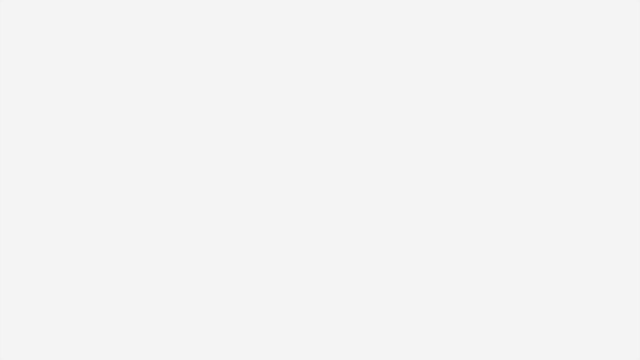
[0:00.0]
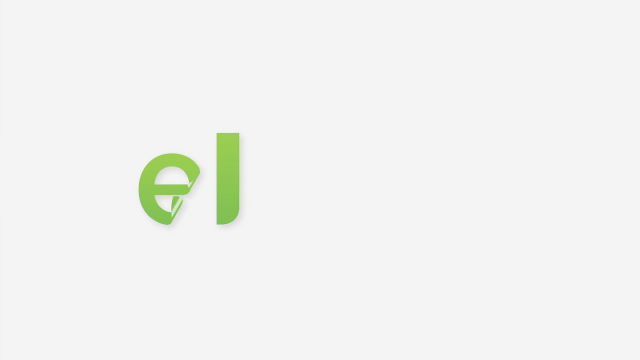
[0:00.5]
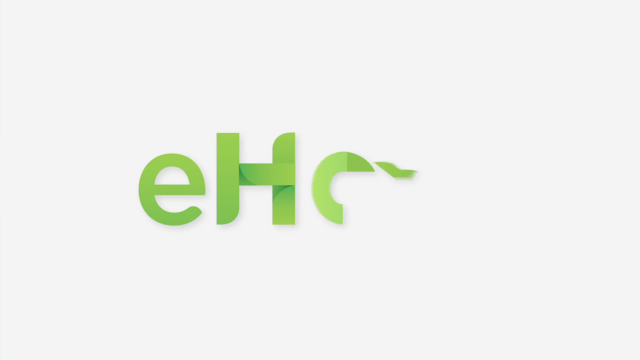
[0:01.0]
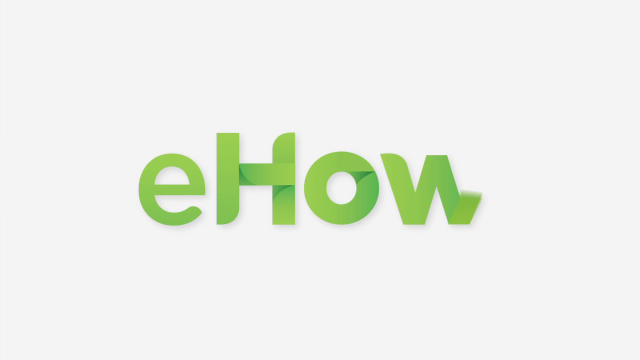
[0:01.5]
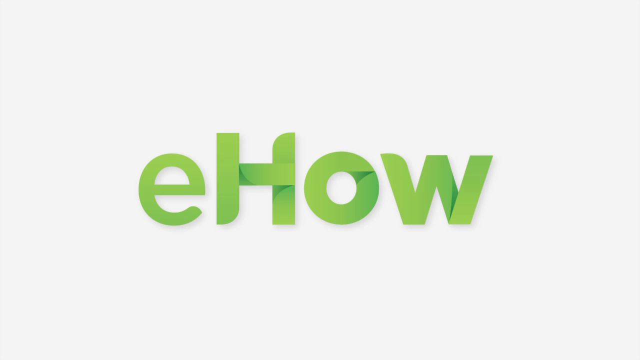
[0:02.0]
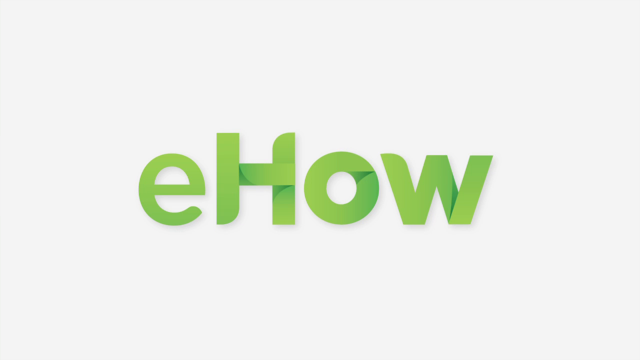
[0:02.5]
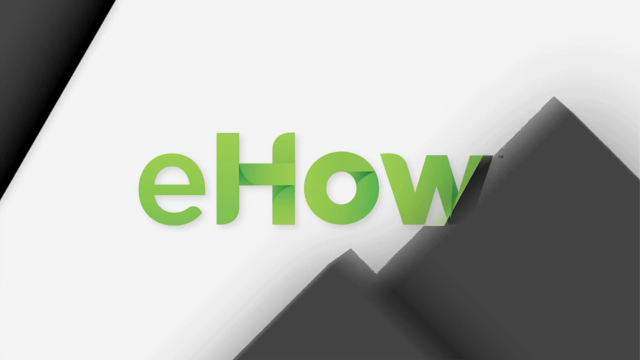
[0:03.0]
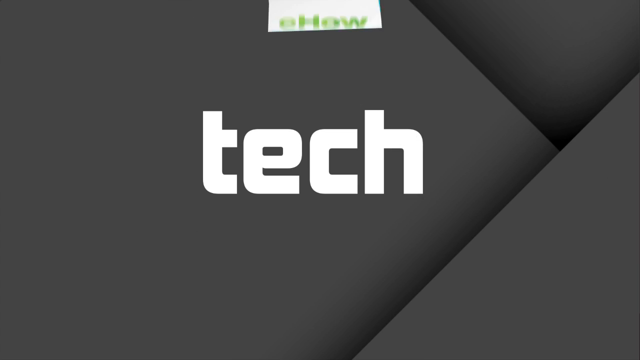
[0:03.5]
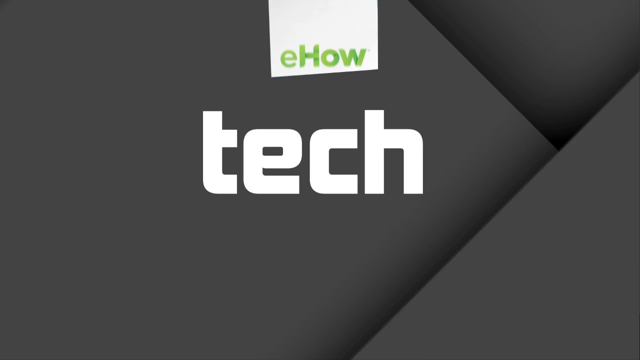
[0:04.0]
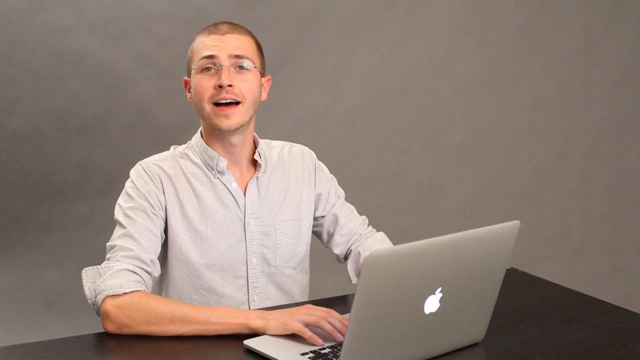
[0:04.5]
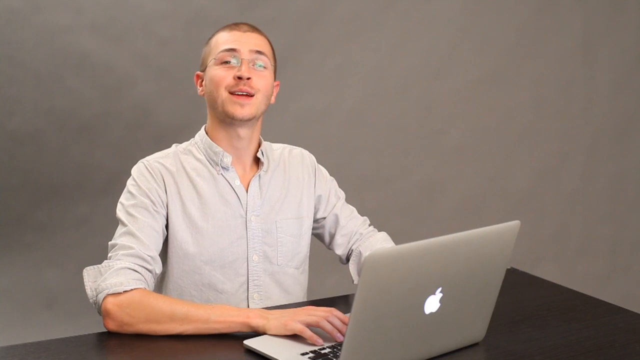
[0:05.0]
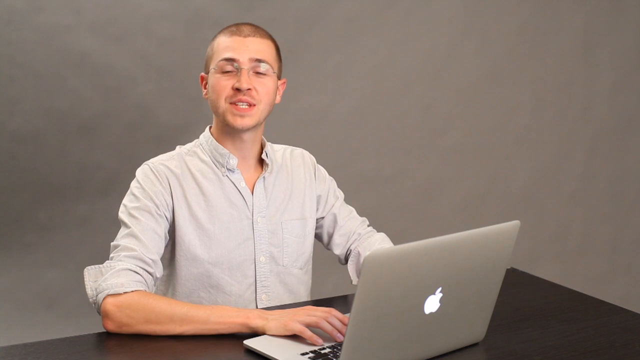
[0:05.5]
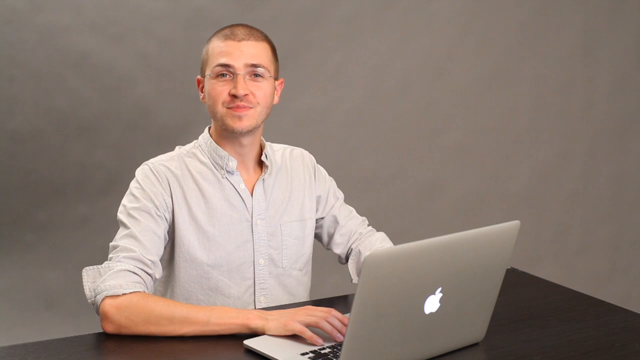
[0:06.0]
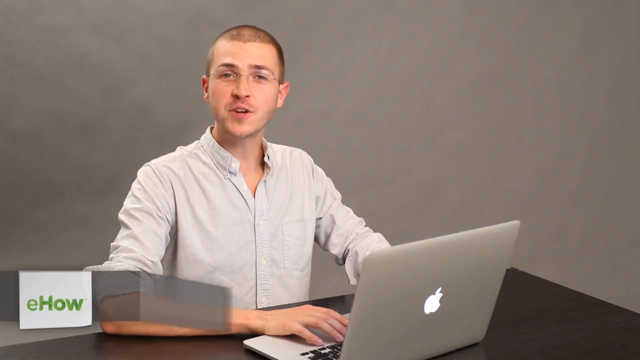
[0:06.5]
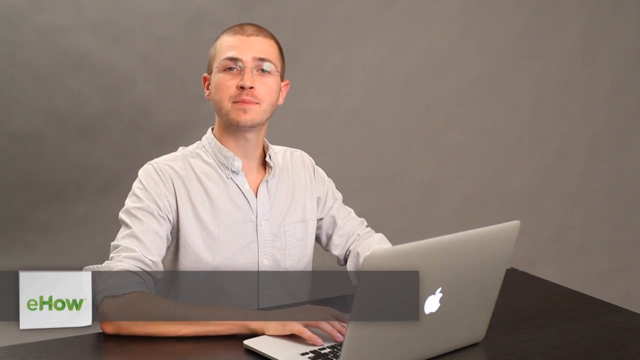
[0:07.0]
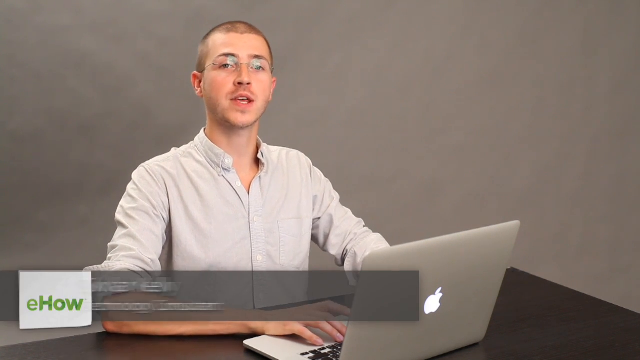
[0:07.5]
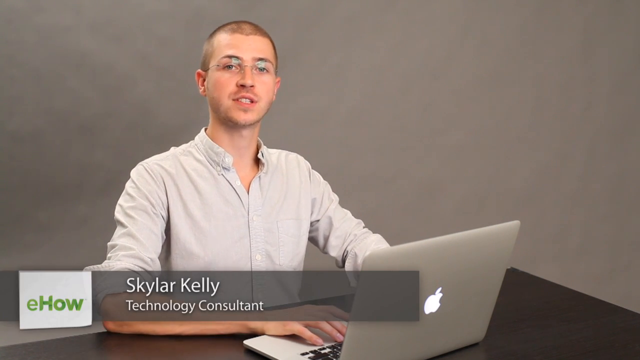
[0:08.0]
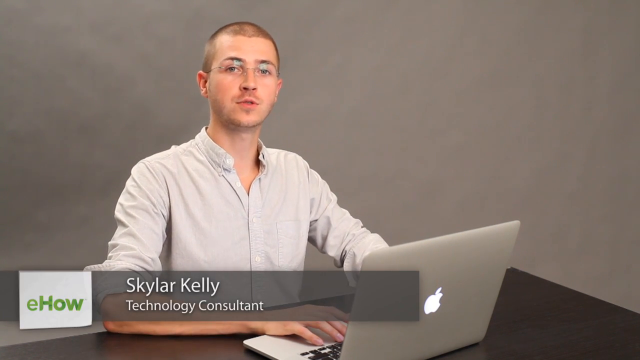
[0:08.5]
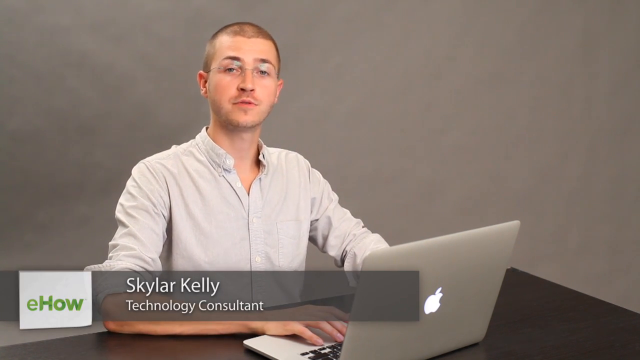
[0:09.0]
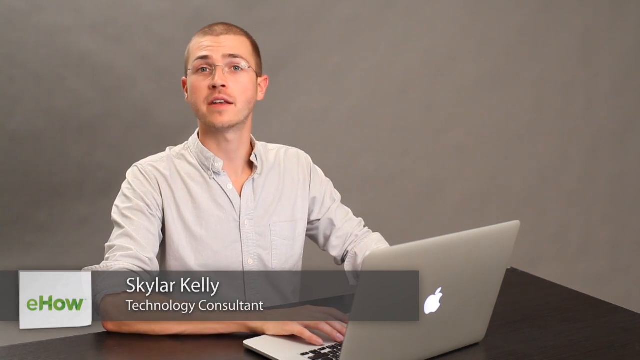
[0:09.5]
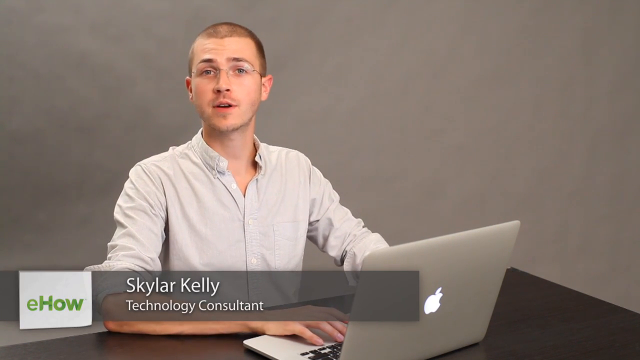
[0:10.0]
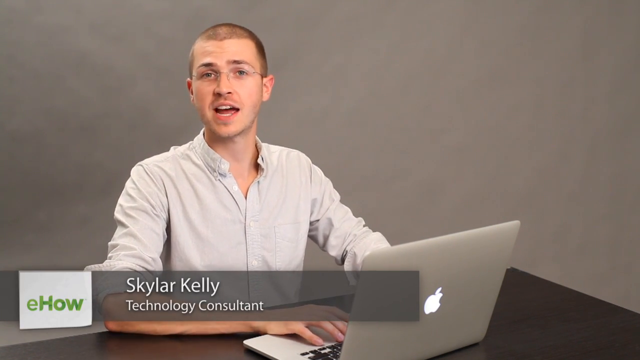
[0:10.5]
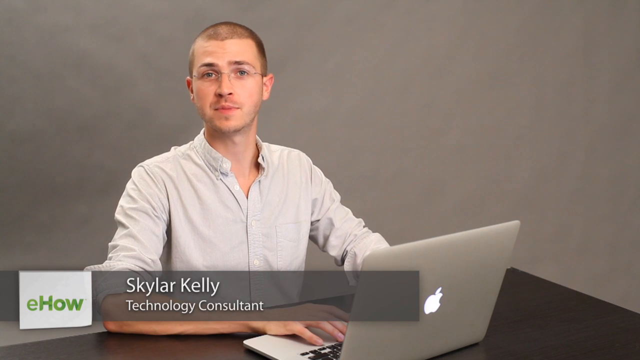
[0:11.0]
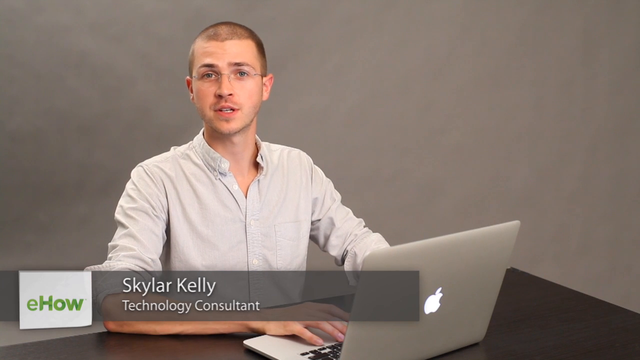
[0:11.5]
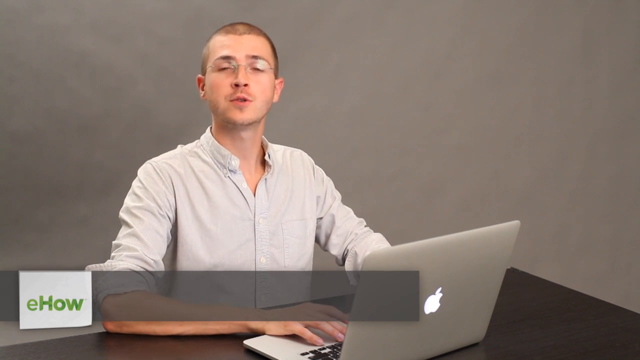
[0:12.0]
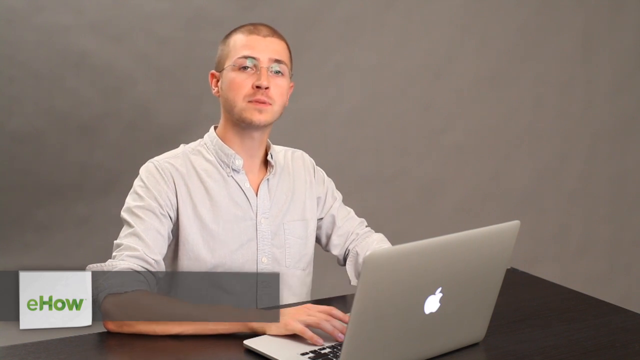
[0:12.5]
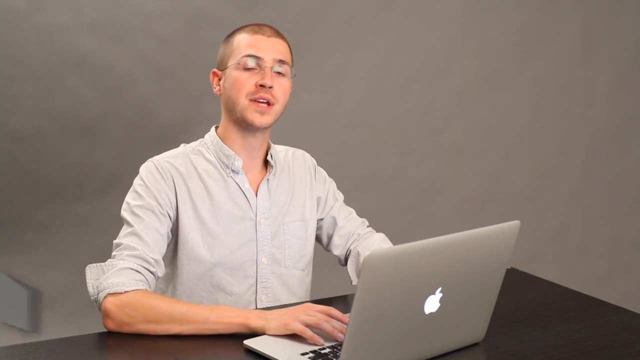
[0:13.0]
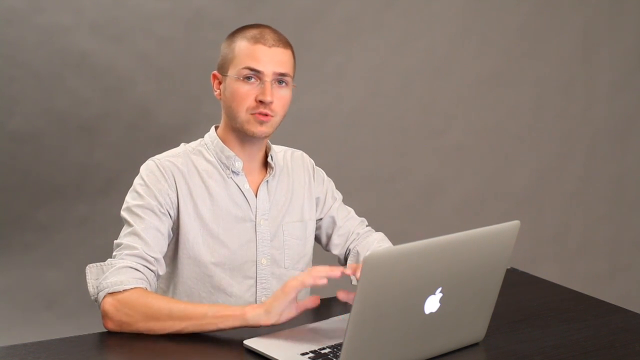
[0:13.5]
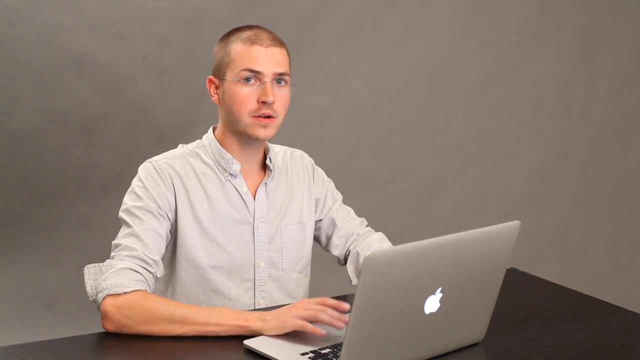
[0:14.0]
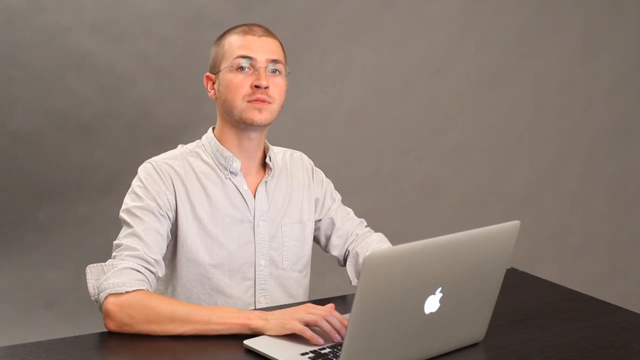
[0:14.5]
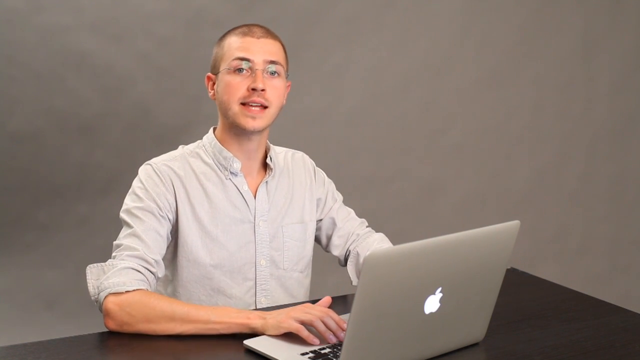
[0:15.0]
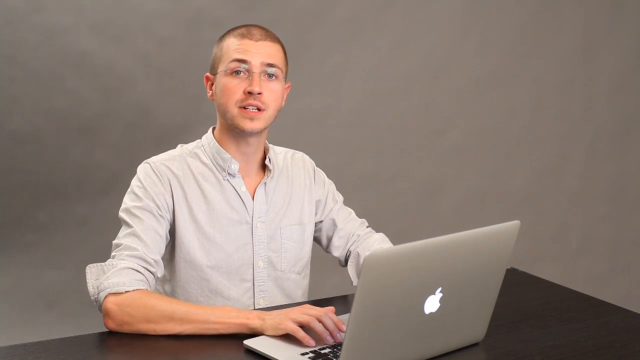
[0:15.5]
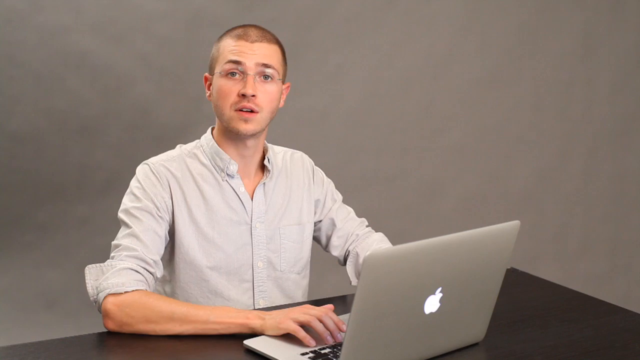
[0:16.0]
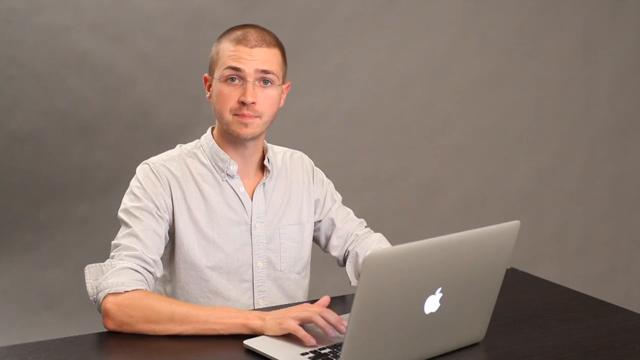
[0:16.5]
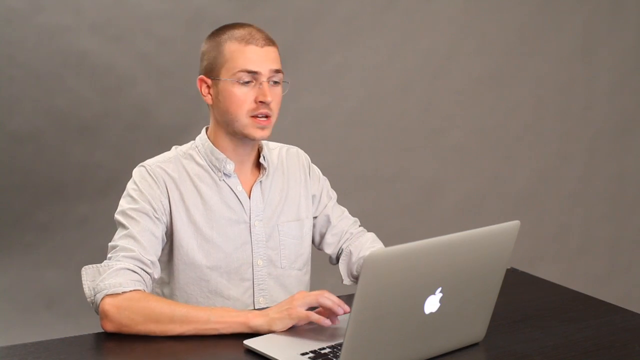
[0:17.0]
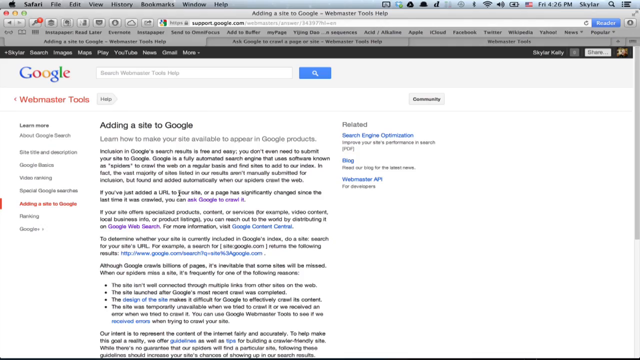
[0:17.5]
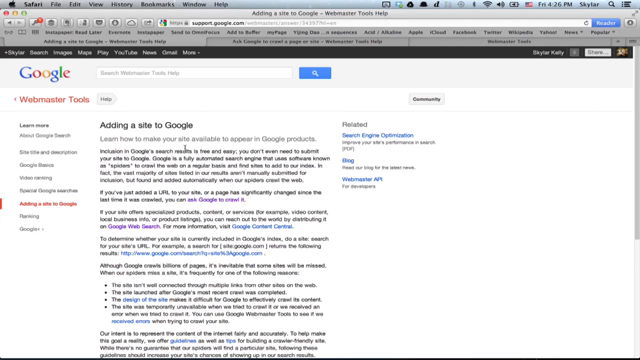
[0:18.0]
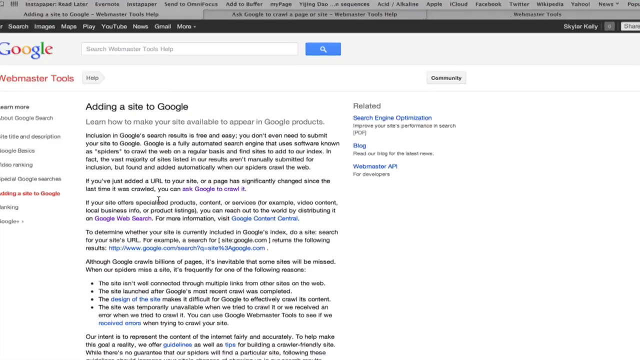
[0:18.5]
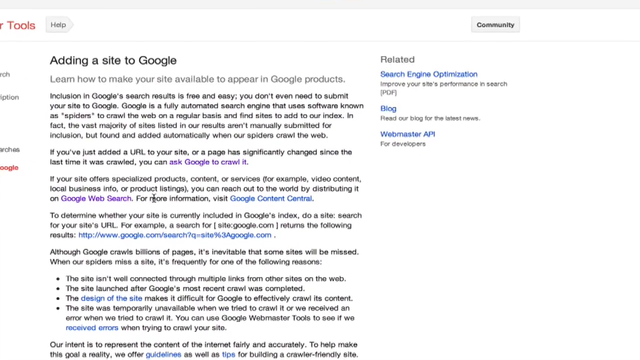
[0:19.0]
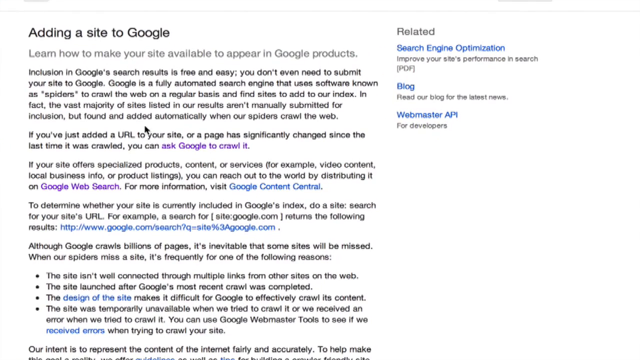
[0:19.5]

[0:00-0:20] On a white background, the letters "e", "H", "o" and "w" (a small e, a capital H, a small o and a small w) appear individually, letter by letter, from left to right in the center of the screen. This is replaced by a black screen as black sections come across the screen to cover it. "ehow" then appears in a white square on a black background, with "tech" in lowercase letters below it at the center of the screen. Sections of border form around it: in the bottom right corner a triangular piece runs almost halfway across along the bottom and about three quarters of the way up the right side. Another black piece runs behind it on the diagonal, in line with the first triangle, from about a third of the way down that triangle, with a line going up on the diagonal to just past the white square containing "ehow". The scene switches to a young man sitting just left of center. He wears an open-necked, light-colored shirt, has very short, cropped hair, possibly trimmed to about a number two, and smiles at the camera in front of a gray wall. His arms are out in front of him, with his right elbow resting on the edge of a desk with a black top, and his hand is where the keyboard is likely to be on an Apple computer, which is open with the Apple symbol visible in the middle of its back. A band appears across the bottom from the left, reading "ehow" and then "Skyler Kelly, technology consultant", as he continues to look at and speak to the camera.